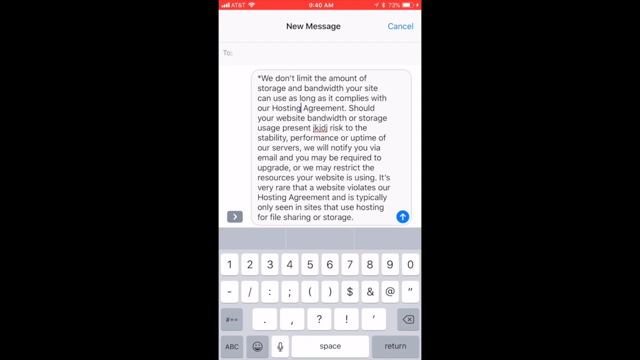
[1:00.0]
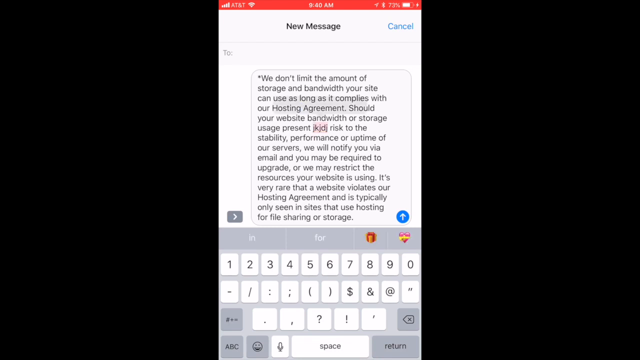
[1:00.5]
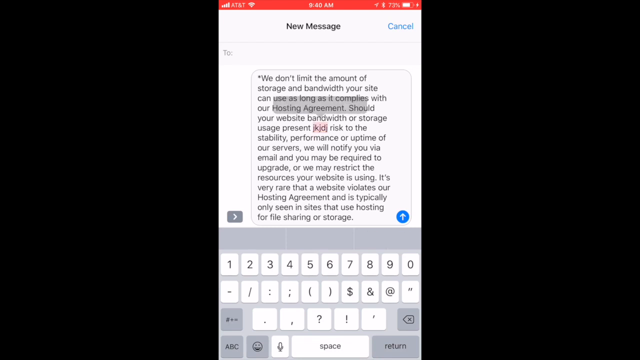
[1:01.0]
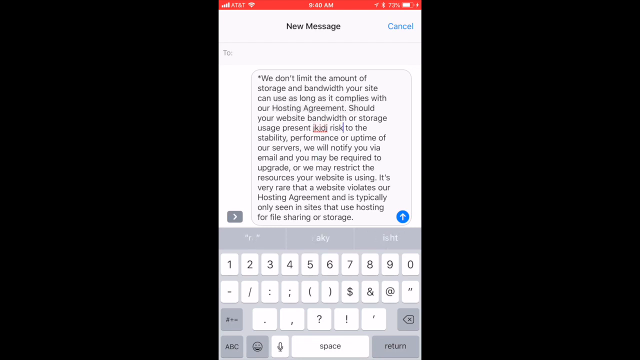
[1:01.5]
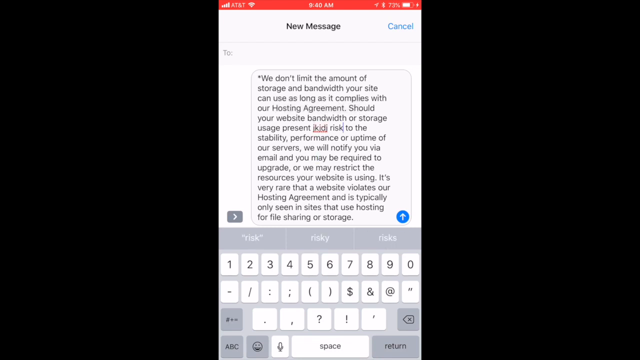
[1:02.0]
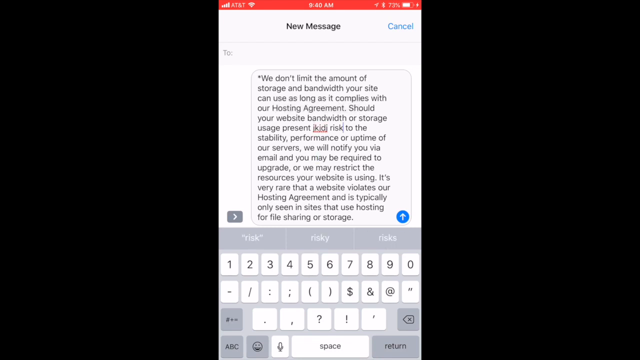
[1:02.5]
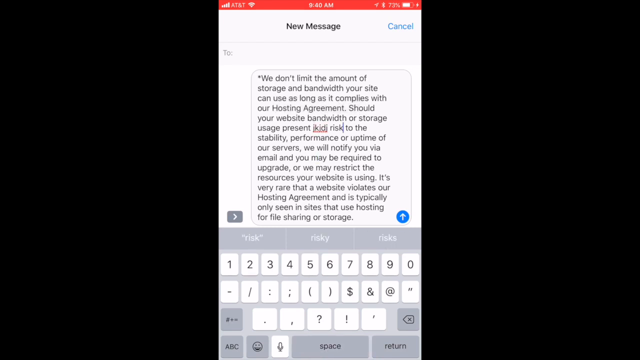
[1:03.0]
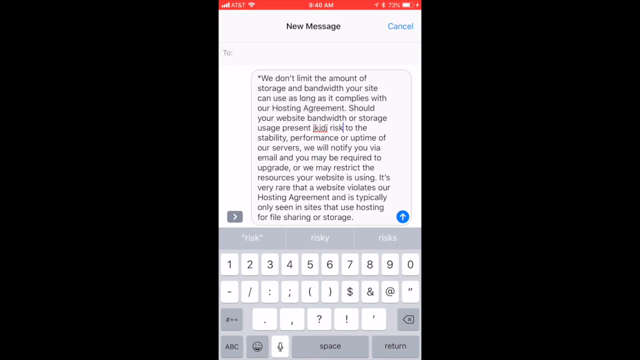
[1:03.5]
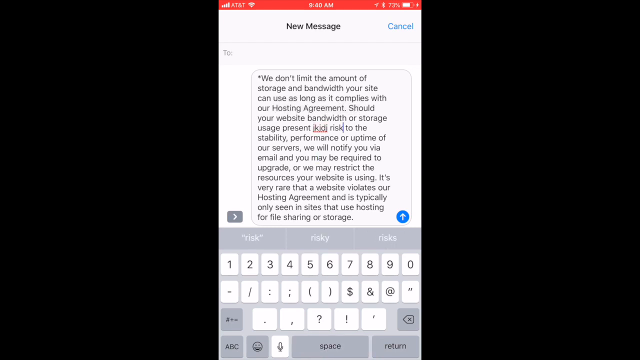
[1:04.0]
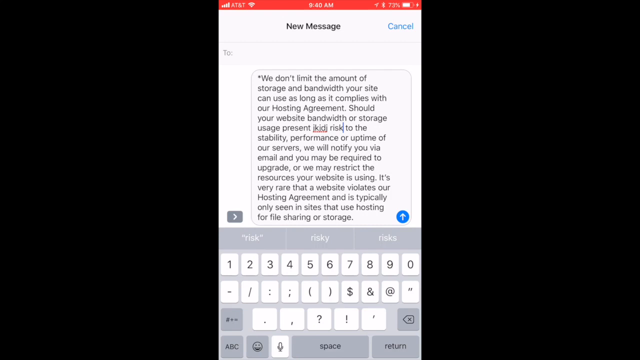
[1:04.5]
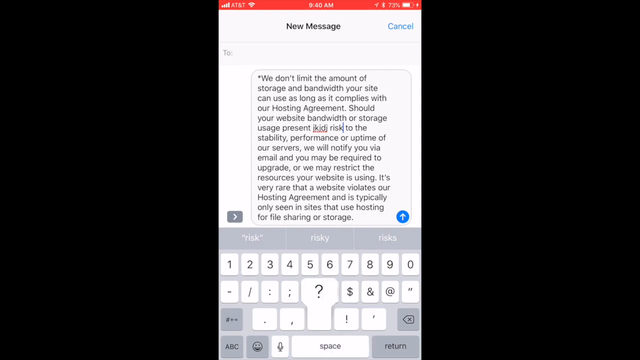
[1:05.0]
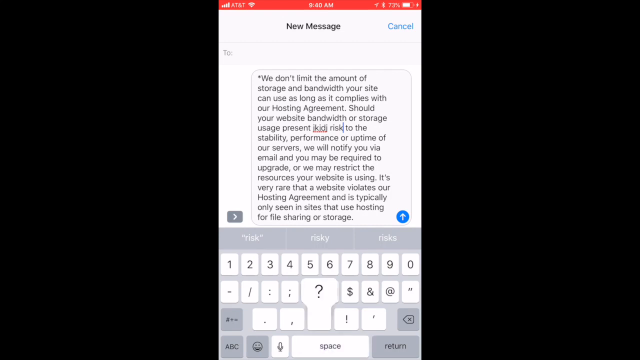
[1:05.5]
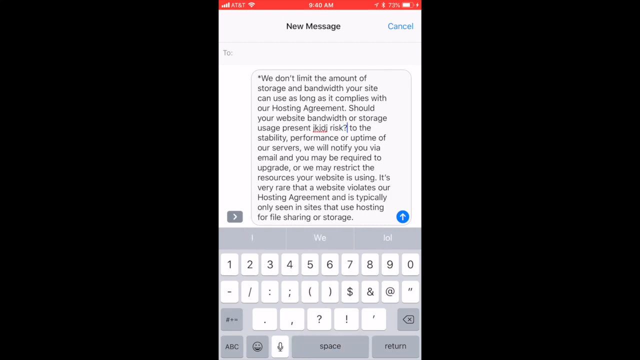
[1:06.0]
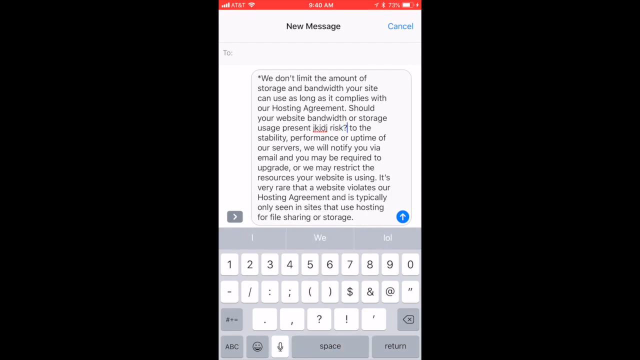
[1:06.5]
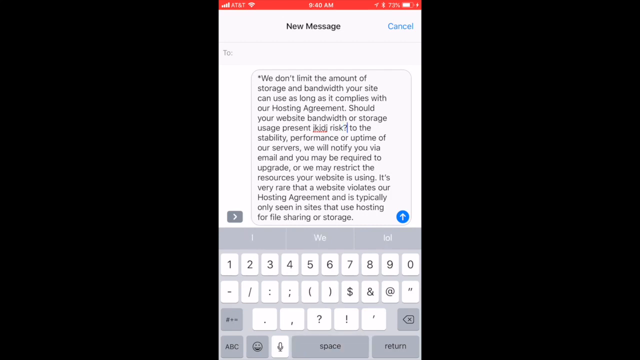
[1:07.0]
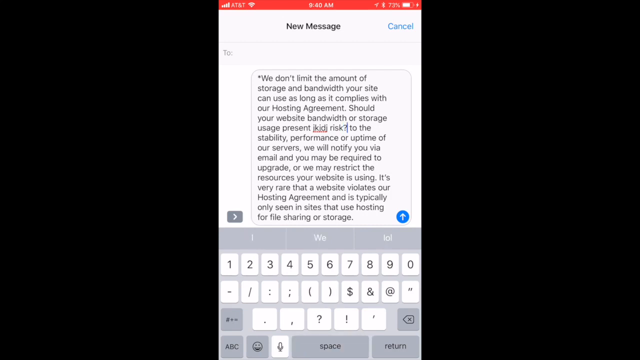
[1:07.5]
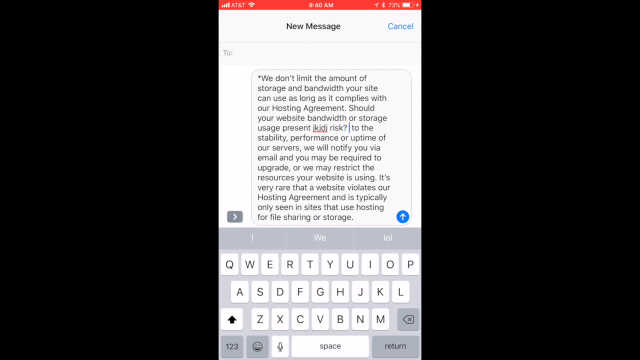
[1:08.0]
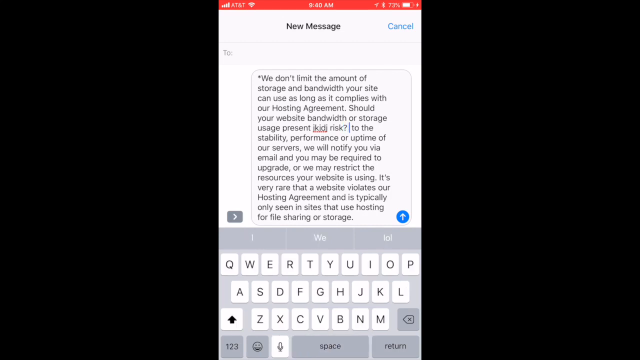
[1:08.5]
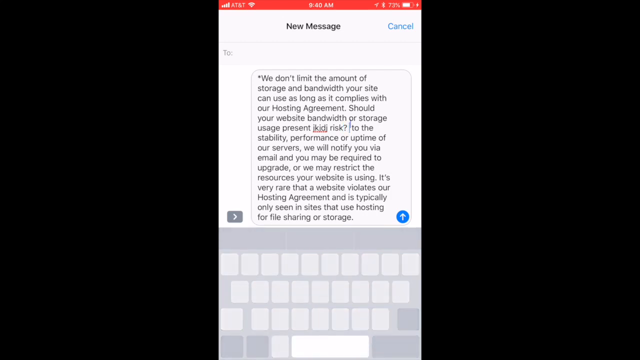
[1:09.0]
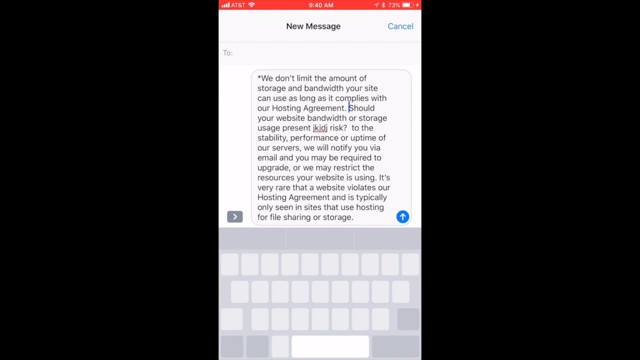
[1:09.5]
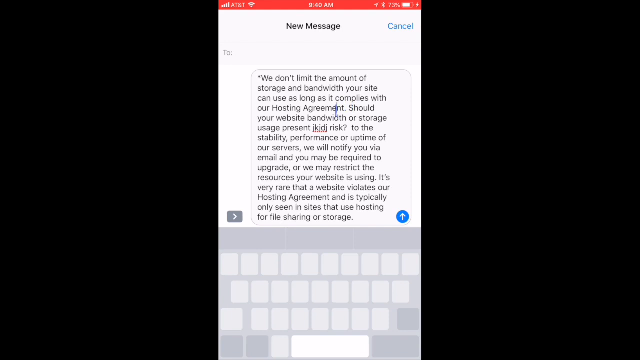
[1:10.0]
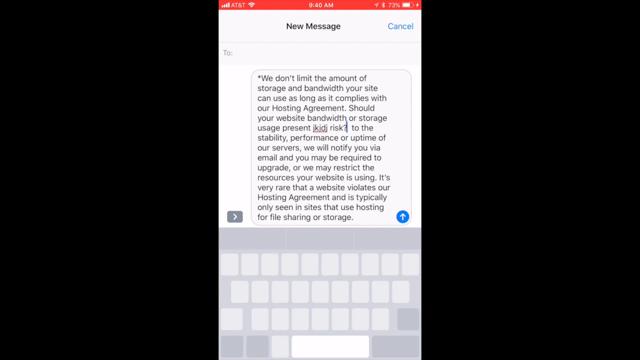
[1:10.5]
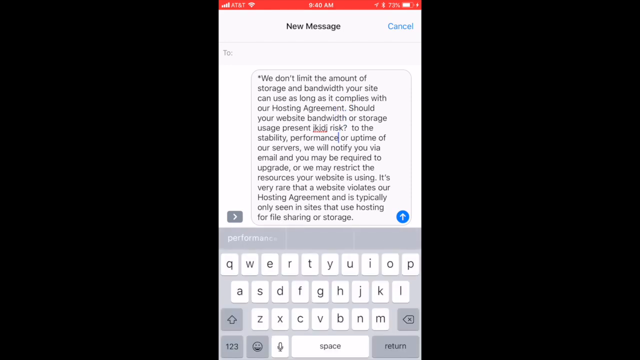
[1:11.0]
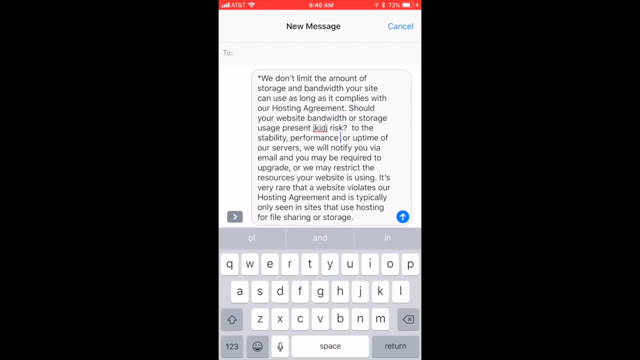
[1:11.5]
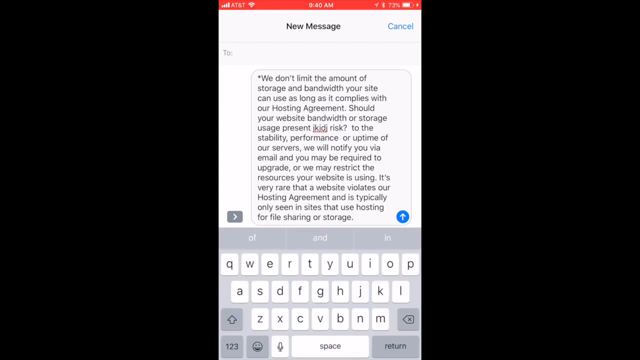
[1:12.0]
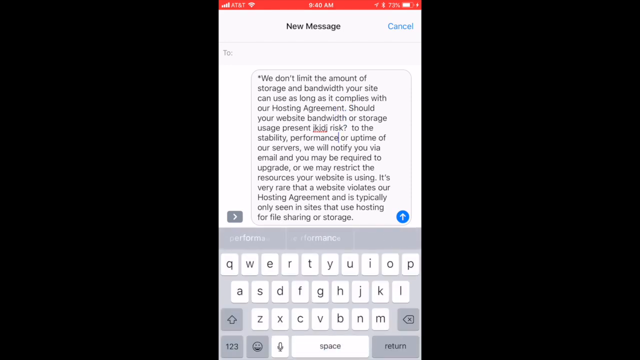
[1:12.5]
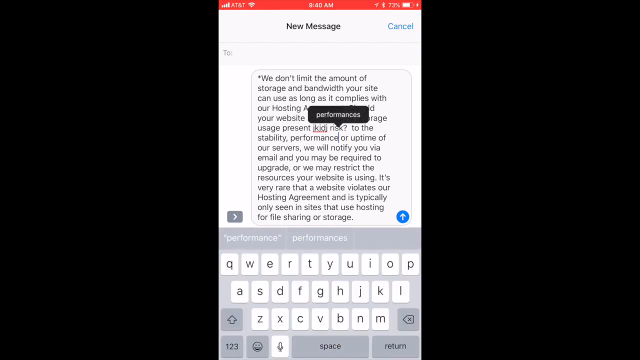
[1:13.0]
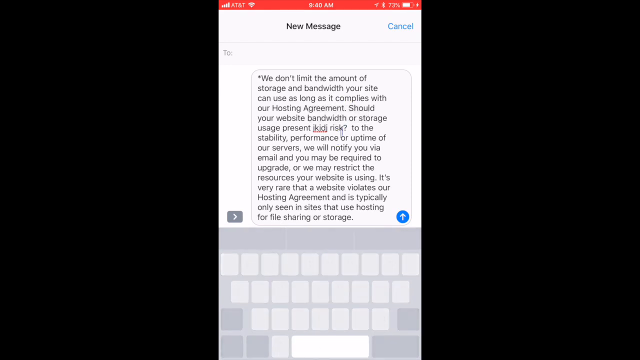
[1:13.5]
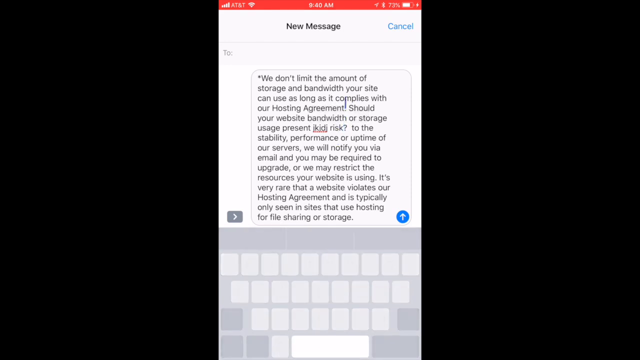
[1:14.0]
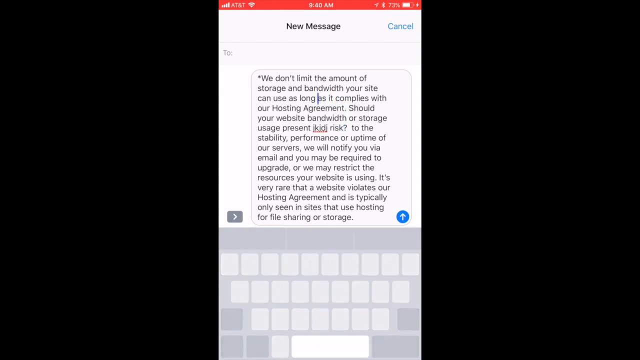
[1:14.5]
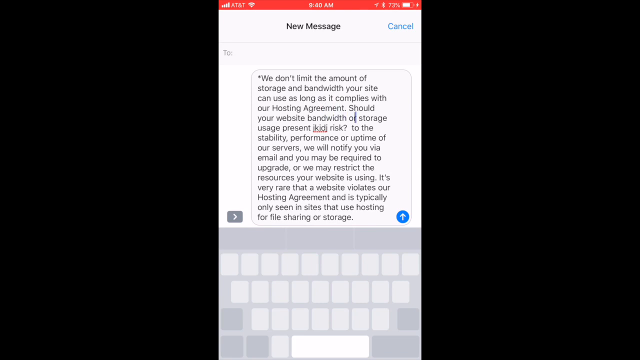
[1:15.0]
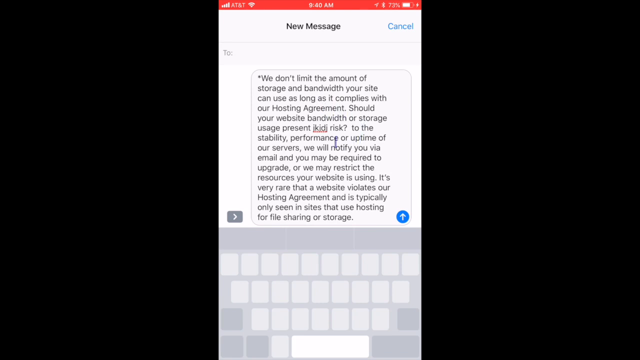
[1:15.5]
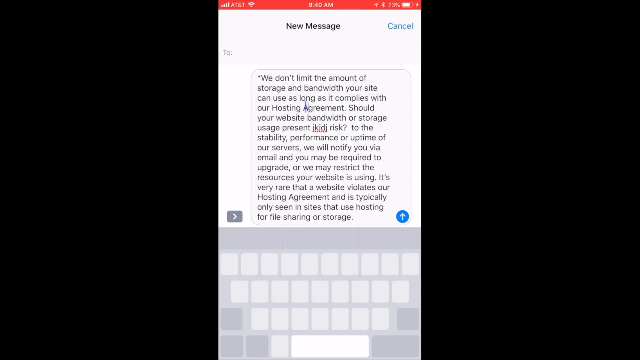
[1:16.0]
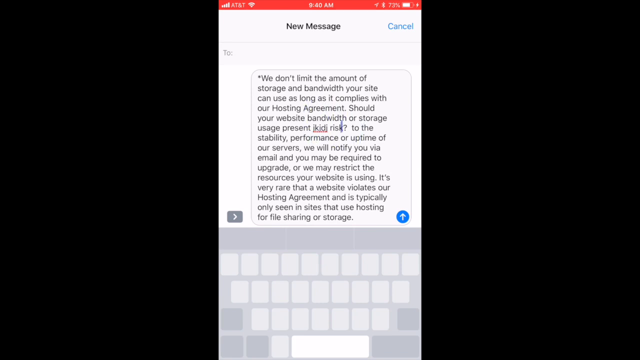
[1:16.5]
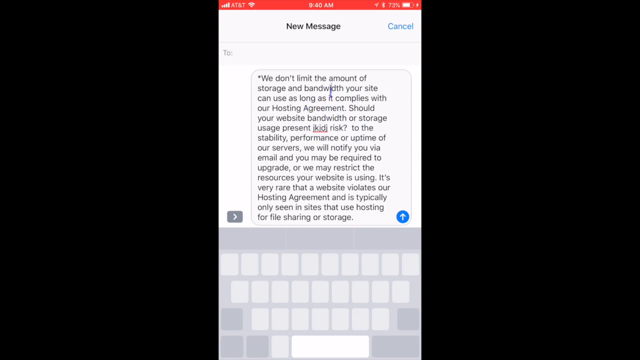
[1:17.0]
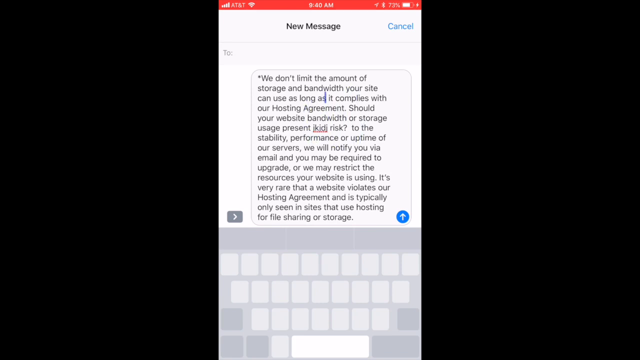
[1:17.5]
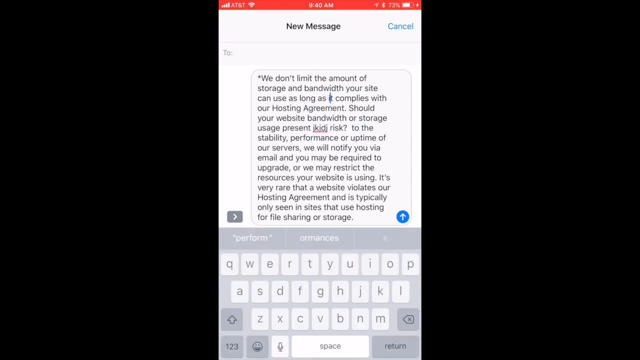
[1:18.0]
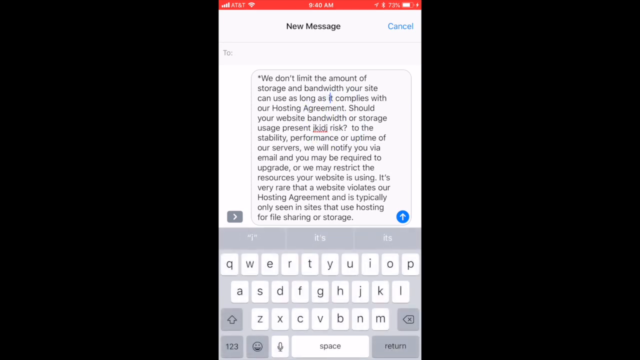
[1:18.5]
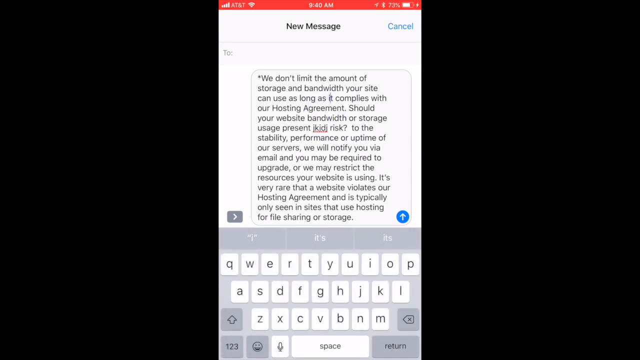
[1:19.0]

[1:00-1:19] The message reads "We don't limit the amount of storage". At the top it shows "new message" and "cancel". There is some text at the top that is not clearly legible, and on the far left something appears to show the network.